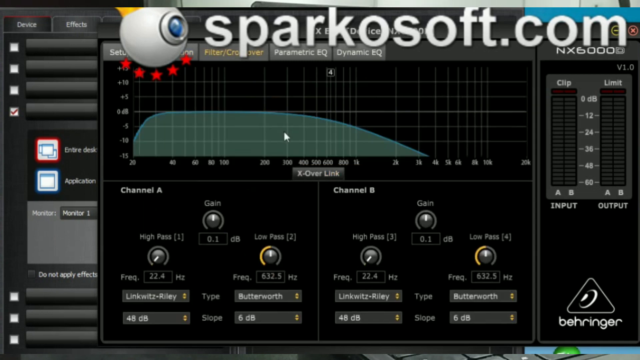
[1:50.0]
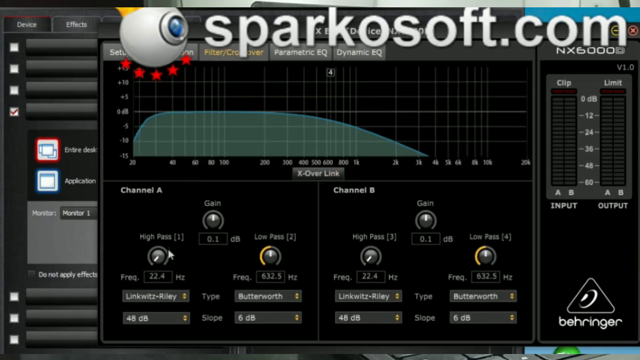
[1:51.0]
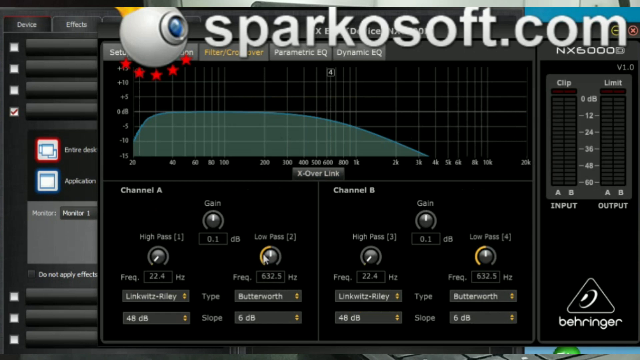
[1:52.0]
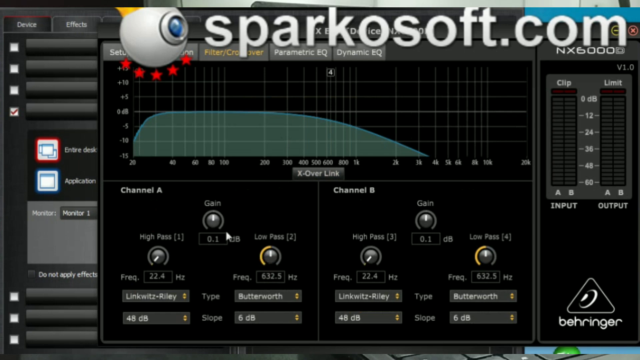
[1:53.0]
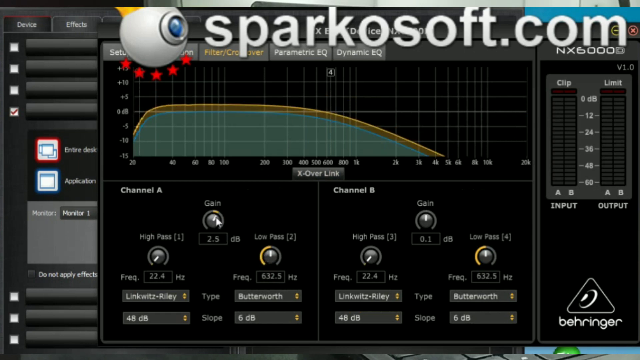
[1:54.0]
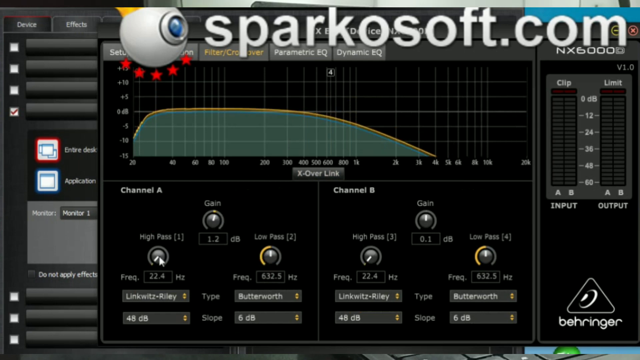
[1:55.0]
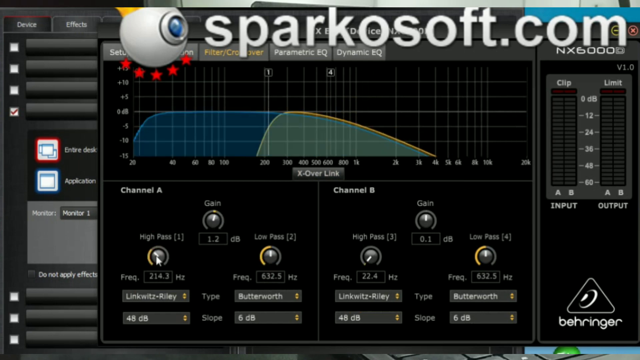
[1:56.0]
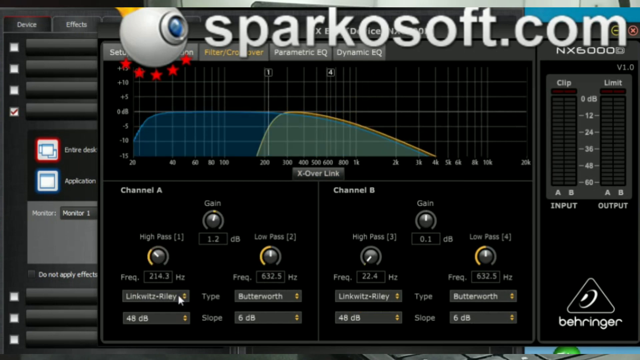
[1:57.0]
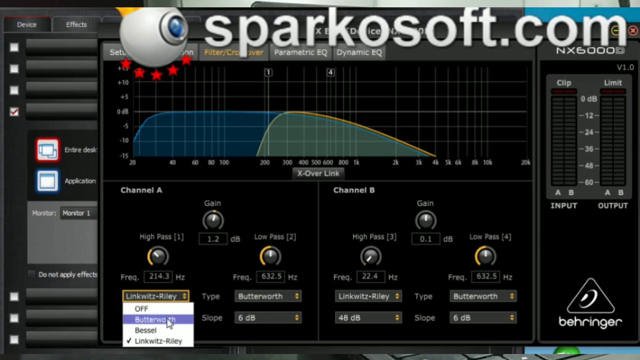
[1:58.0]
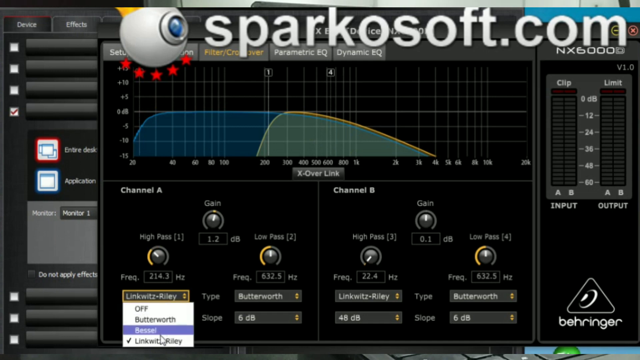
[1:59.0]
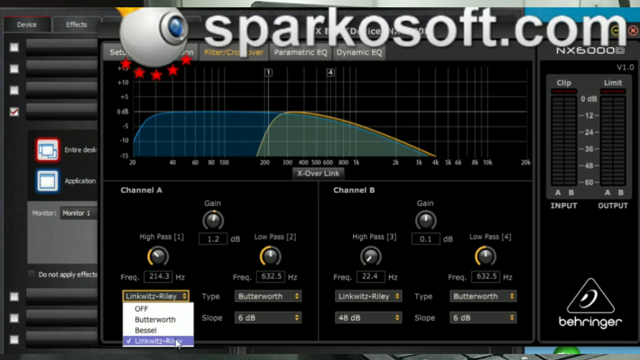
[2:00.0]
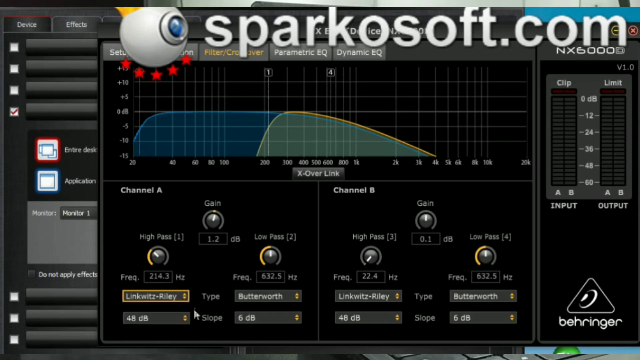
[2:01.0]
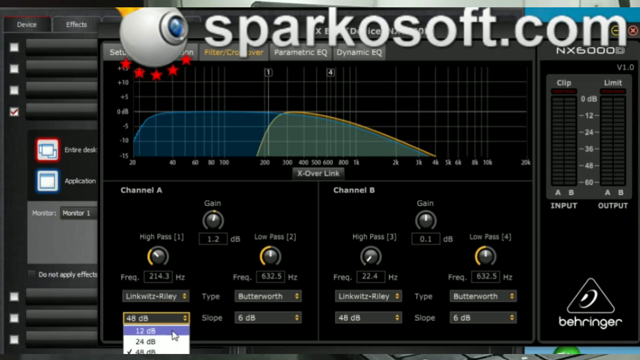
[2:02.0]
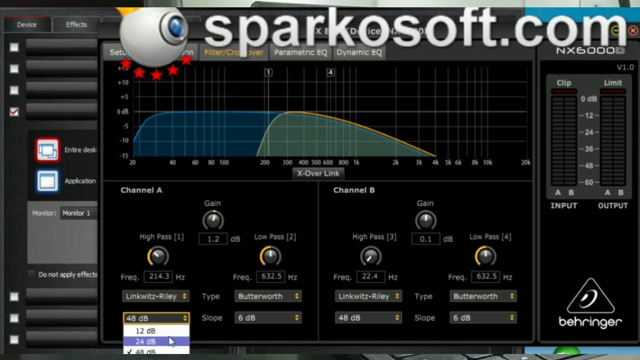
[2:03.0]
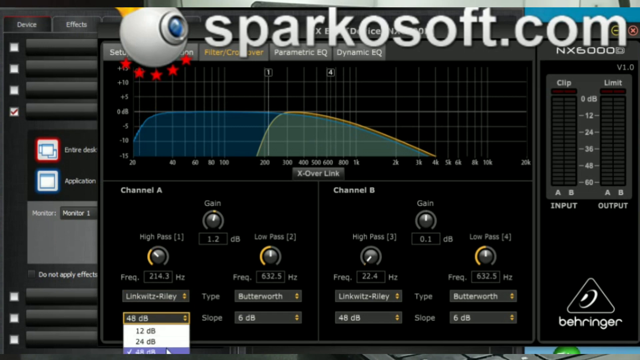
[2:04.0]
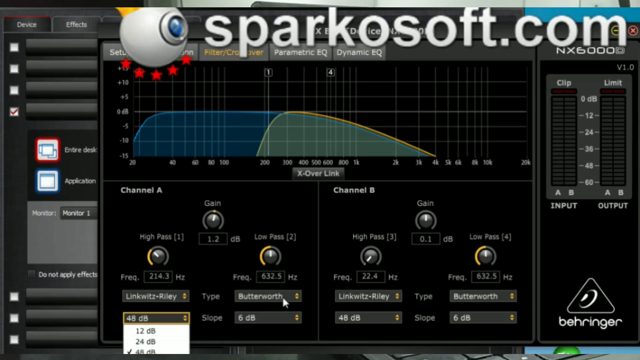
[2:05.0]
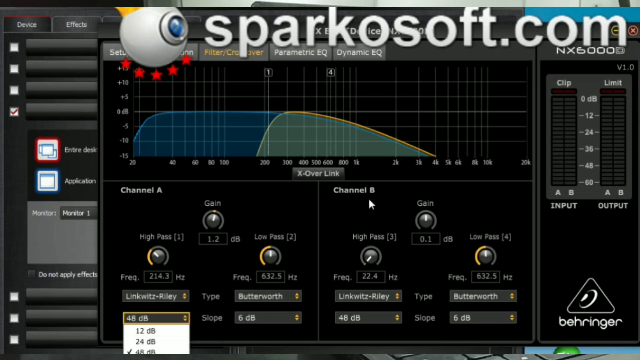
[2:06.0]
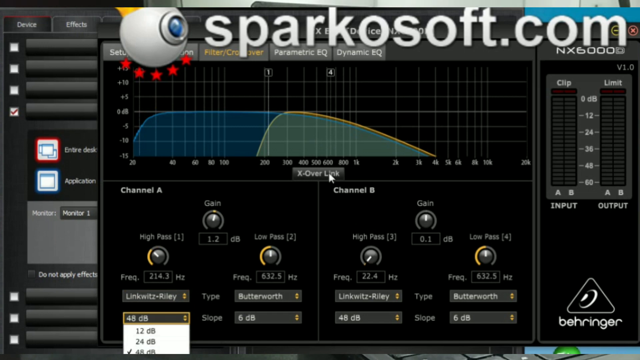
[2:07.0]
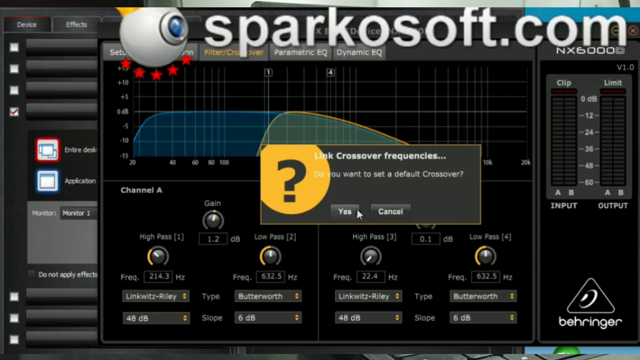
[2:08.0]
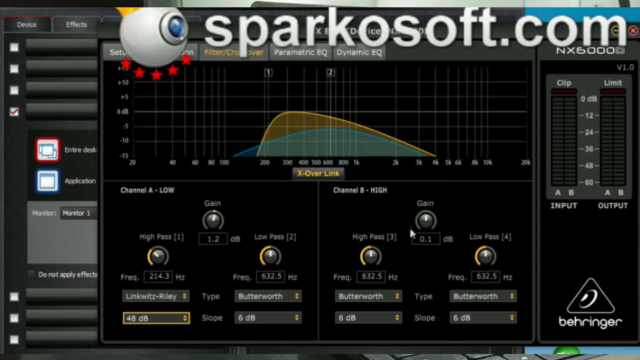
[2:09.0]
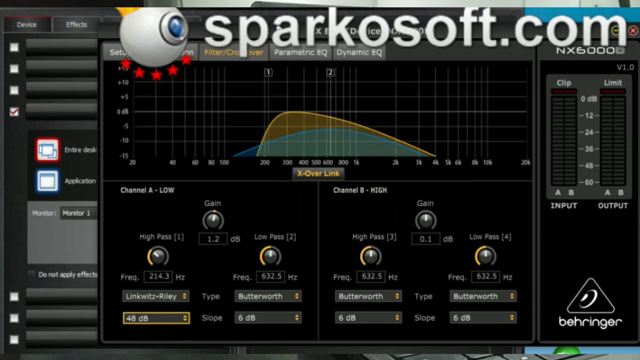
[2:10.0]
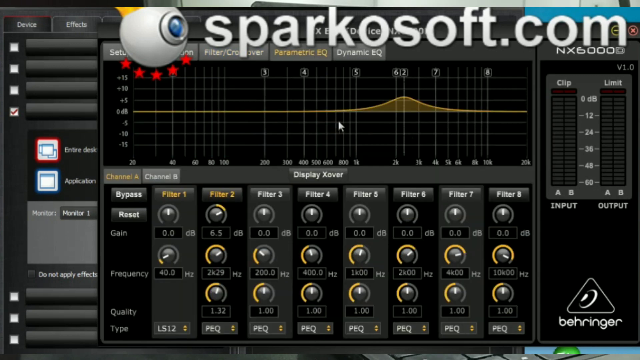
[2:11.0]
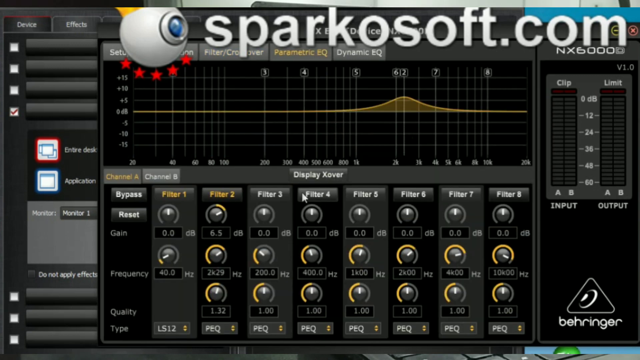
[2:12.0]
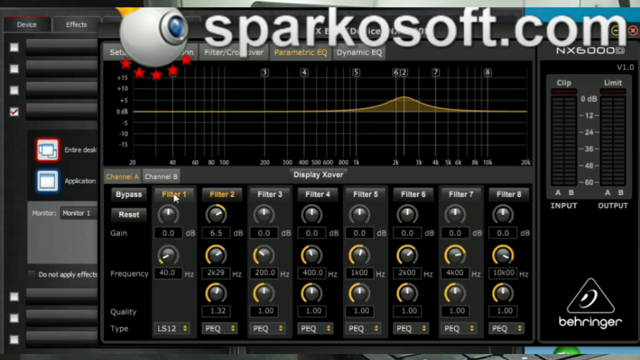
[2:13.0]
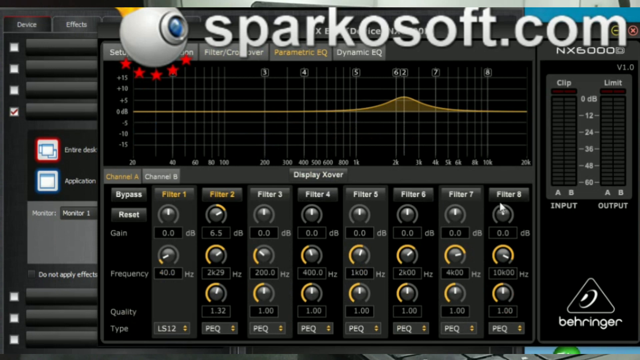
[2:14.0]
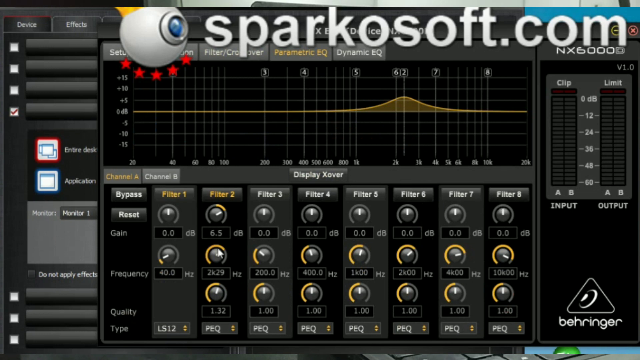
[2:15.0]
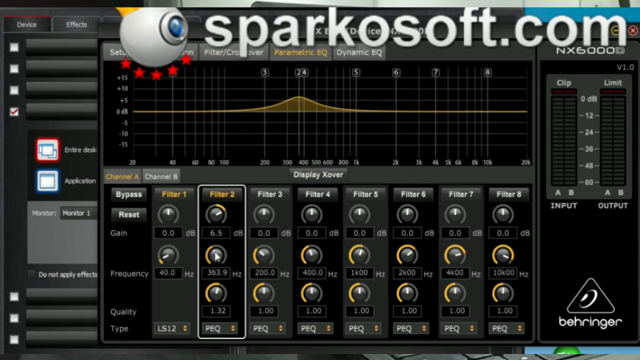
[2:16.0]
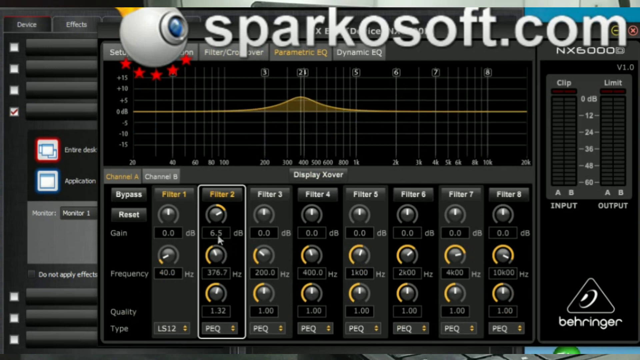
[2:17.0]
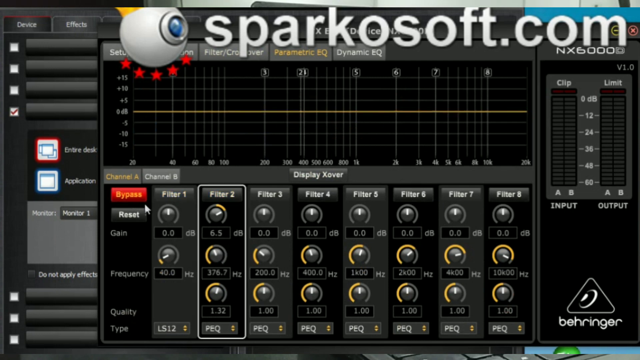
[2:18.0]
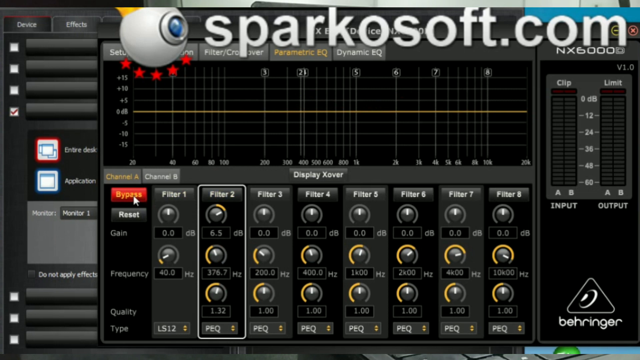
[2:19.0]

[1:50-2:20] The program is still shown, with "sparkosoft.com" in very visible letters overlaid at the top of the screen. The window displays a different area of the program, which looks like it is filtered, though it is not clearly visible because of the website address. There is a graph with an orange line, a blue line, and a big green area below. The user adjusts knobs located under a section called "channel A", moving a knob labeled "high pass" and selecting different decibels and other options in a drop-down. The graph changes, showing a bit more orange and a bit more green. The user clicks a button called "X over link", and a pop-up with the black question mark in an orange circle appears; the user clicks it off. The user then clicks into a tab called "parametric EQ", which shows a different graph that is only orange, with a line that is quite flat except for a little hump. Below it are several virtual knobs labeled "filter 1" through "filter 8", and the user starts to manipulate some of them. The user then clicks a button called "bypass", and it turns red.